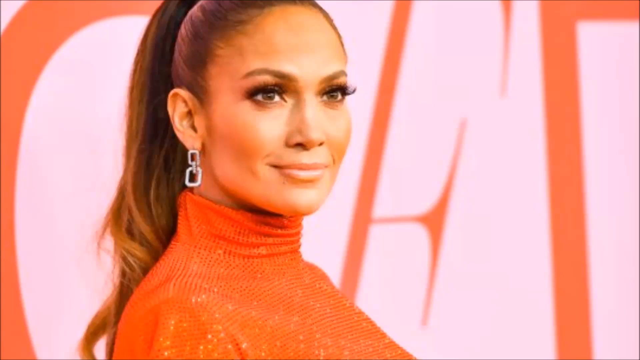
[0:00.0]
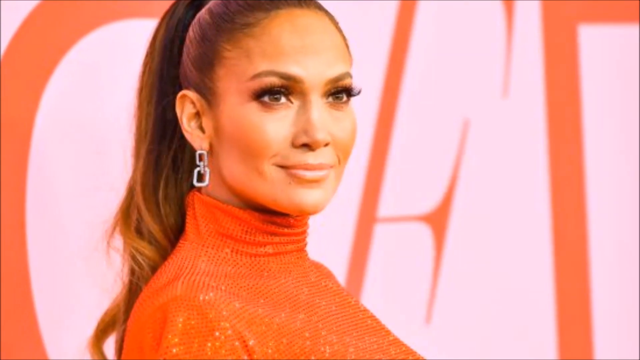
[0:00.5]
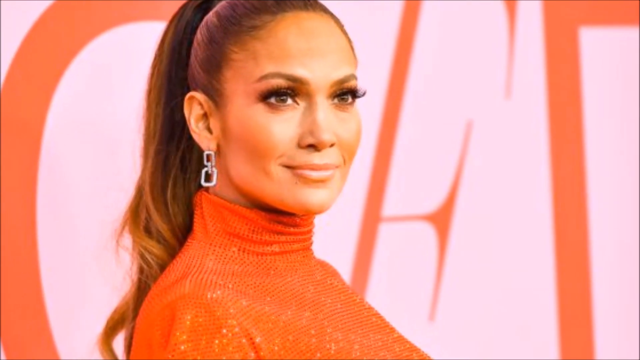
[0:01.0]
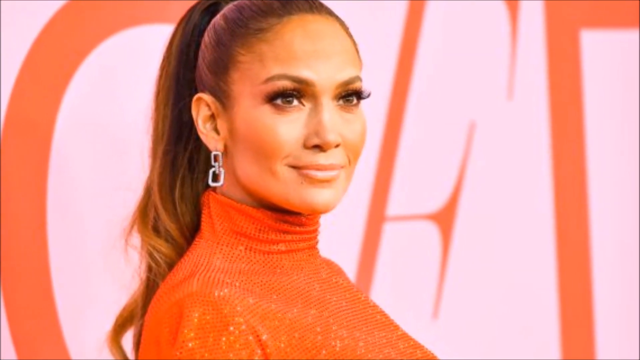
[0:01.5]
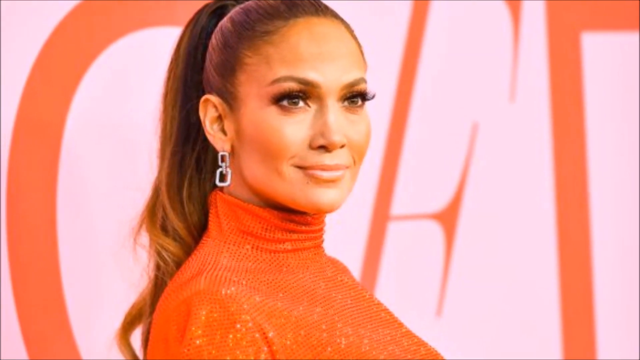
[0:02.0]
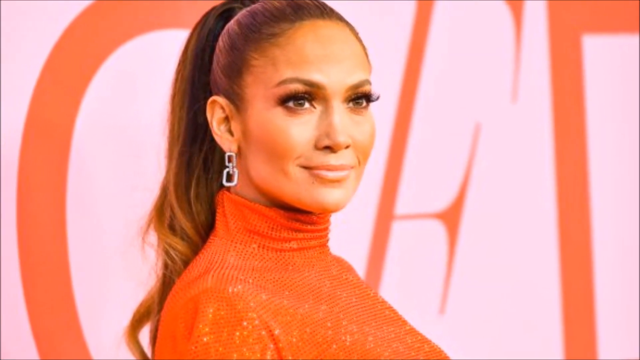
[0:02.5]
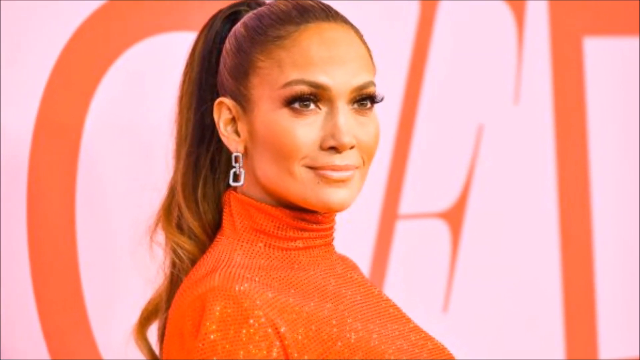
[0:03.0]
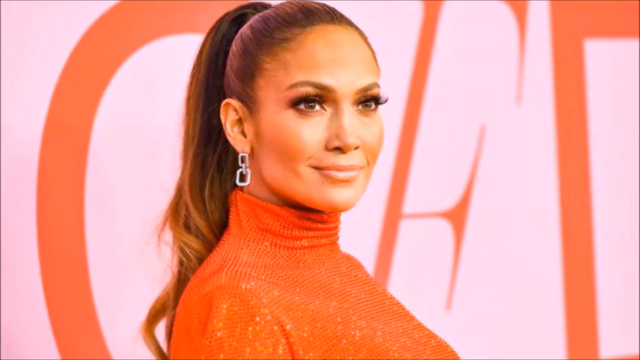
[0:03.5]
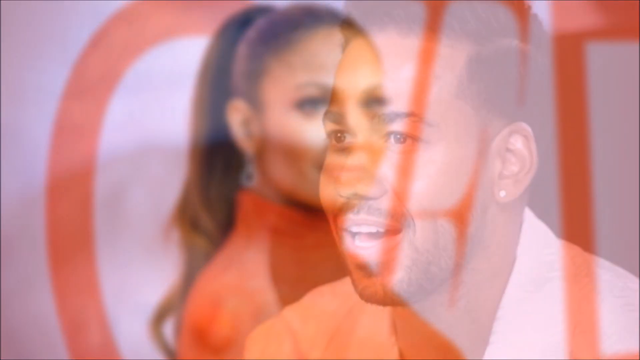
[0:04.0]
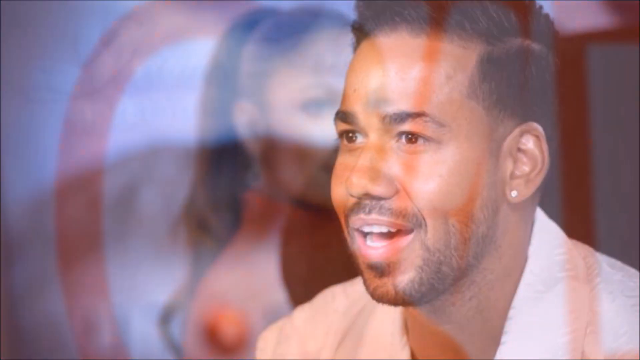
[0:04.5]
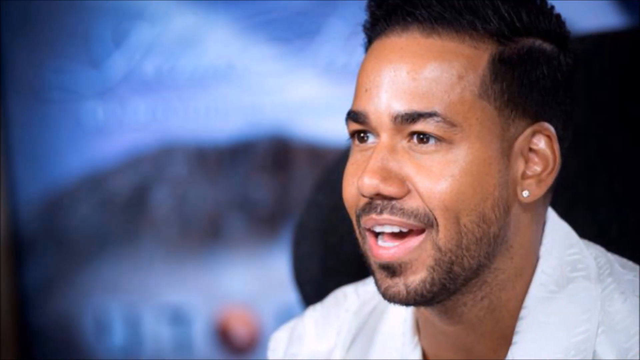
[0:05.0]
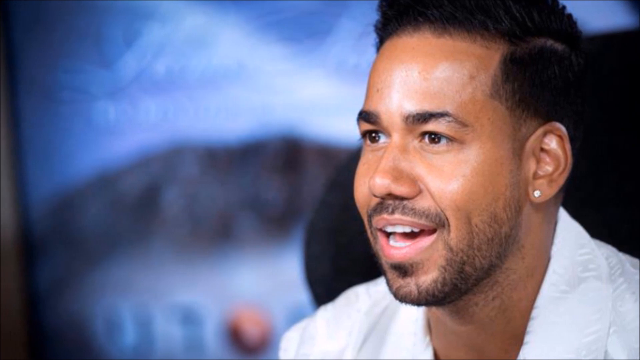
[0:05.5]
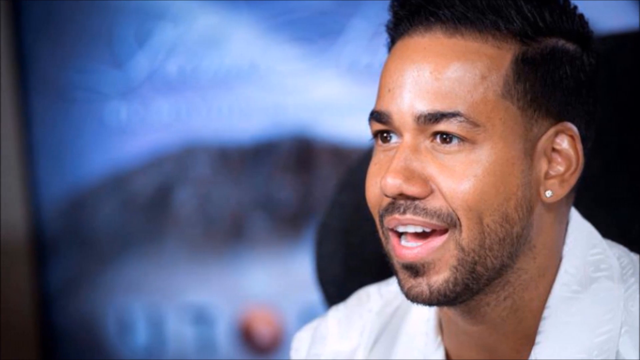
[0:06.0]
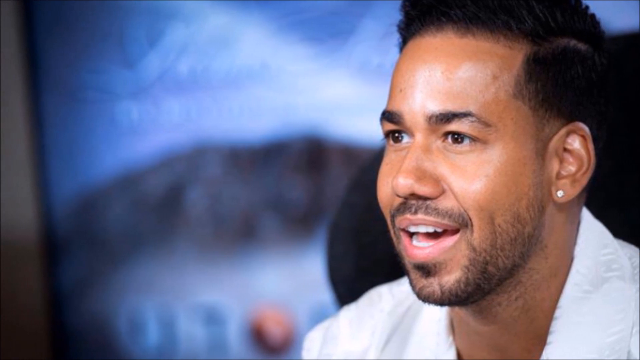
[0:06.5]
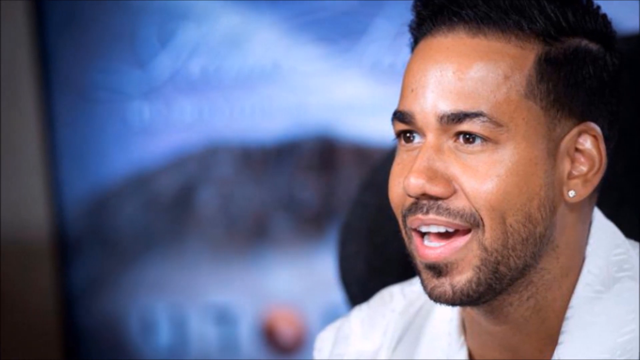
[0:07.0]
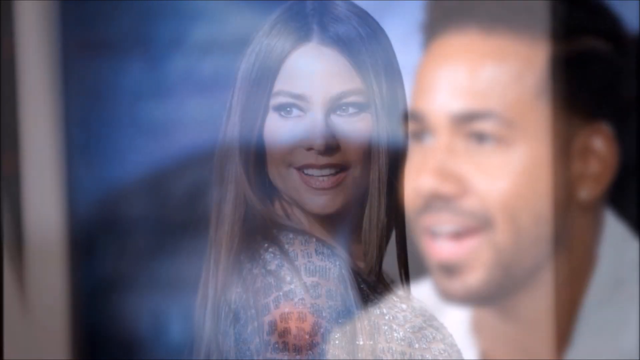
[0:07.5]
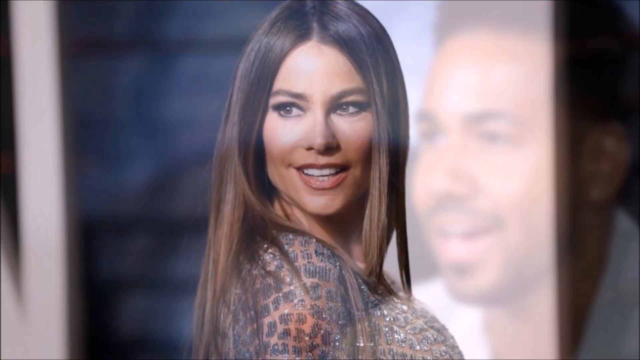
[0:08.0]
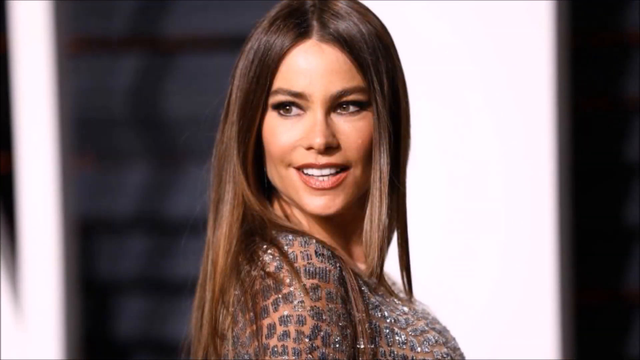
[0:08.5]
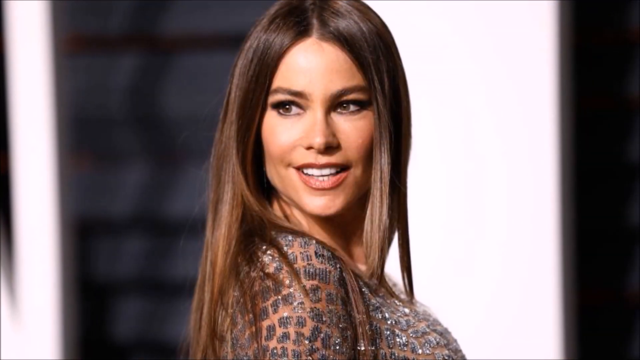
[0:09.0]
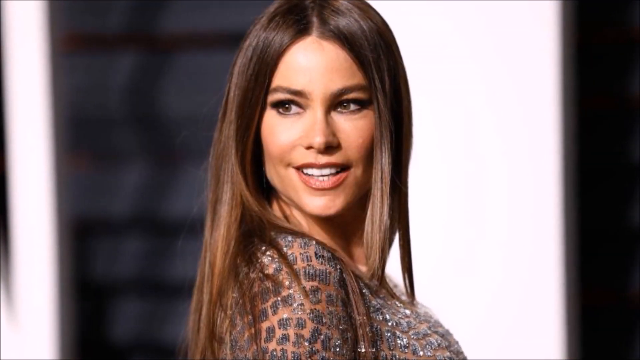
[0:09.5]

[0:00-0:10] A series of photographs of celebrities begins with Jennifer Lopez. Her hair is pulled into a ponytail, and she looks slightly to the side, smiling. She wears an orange turtleneck sweater or dress and earrings that look like links of a chain; there are two links, the top one smaller than the bottom one. The image switches to a close-up photograph of a man, a black man with light brown skin, short black hair, a thin beard and mustache, and a diamond stud earring in his left ear. The final photograph is of Sofia Vergara, looking over her right shoulder. She has straight light brown hair and appears to wear a dress with net underneath and some sort of beads sewn on top. Only her shoulder is visible.